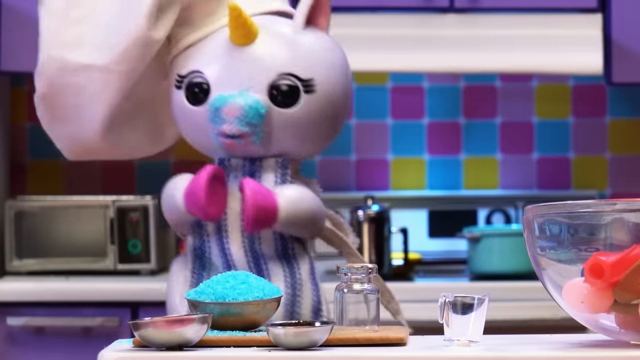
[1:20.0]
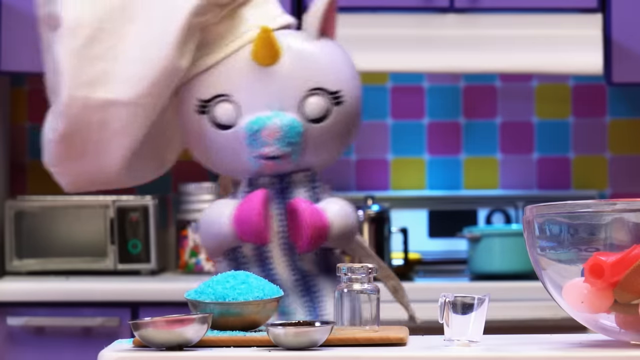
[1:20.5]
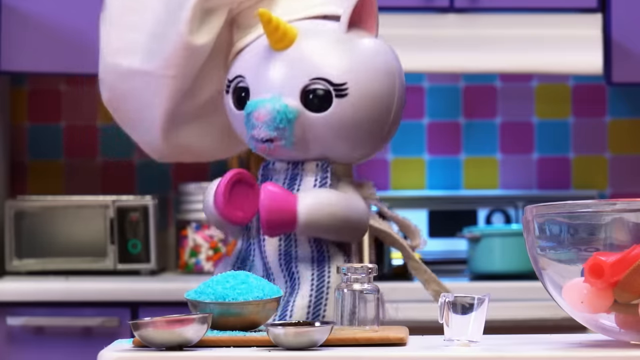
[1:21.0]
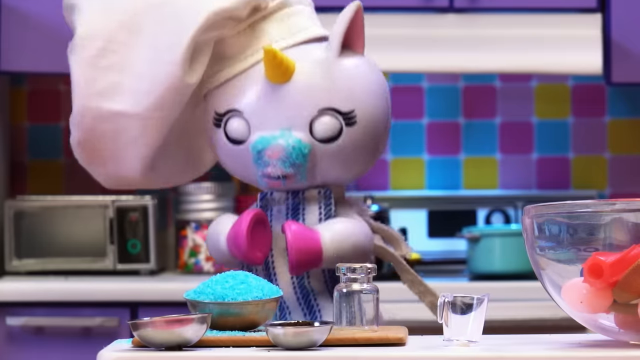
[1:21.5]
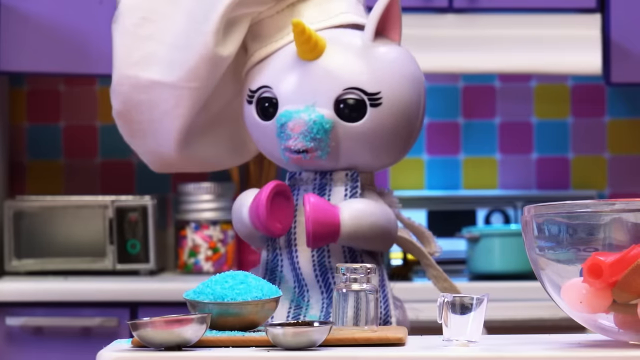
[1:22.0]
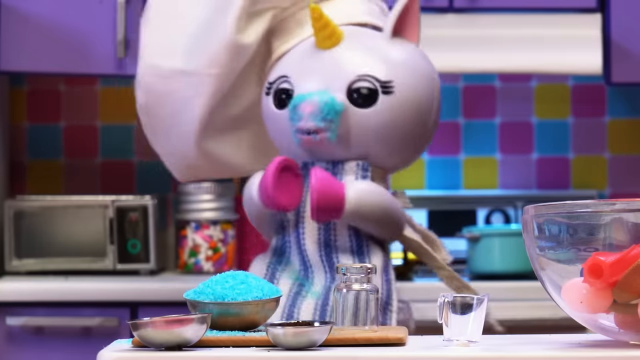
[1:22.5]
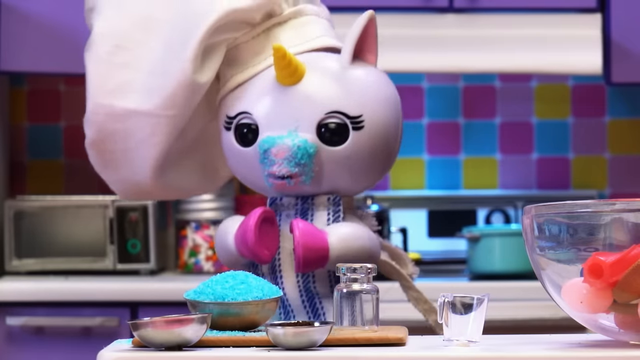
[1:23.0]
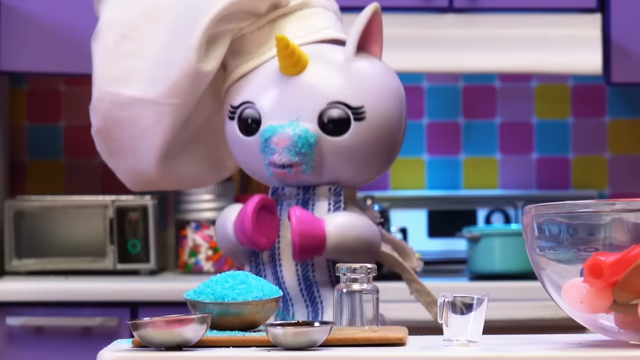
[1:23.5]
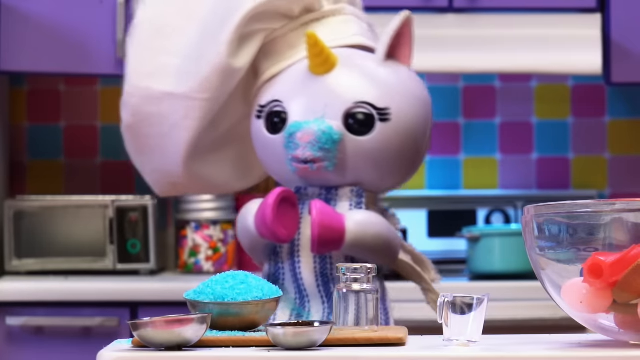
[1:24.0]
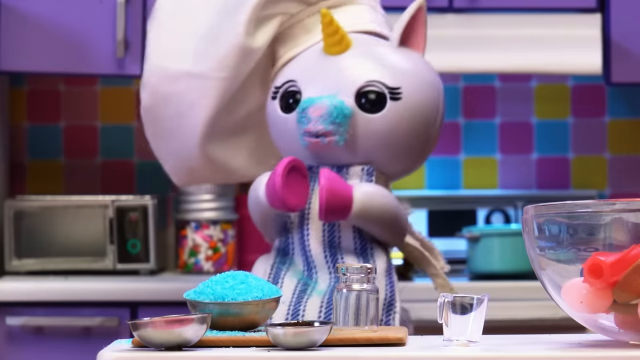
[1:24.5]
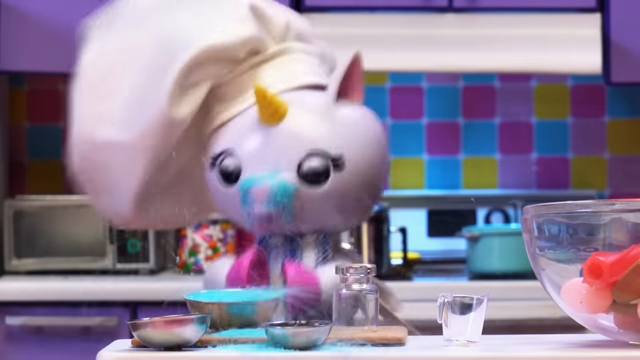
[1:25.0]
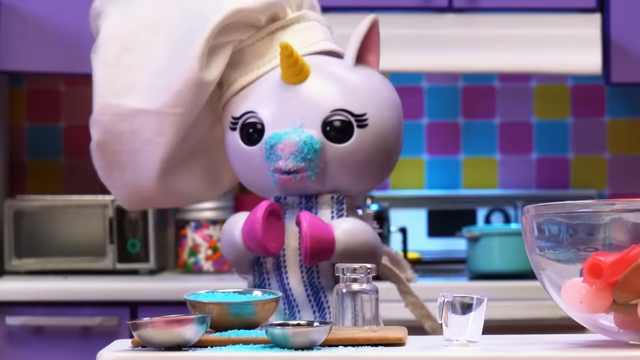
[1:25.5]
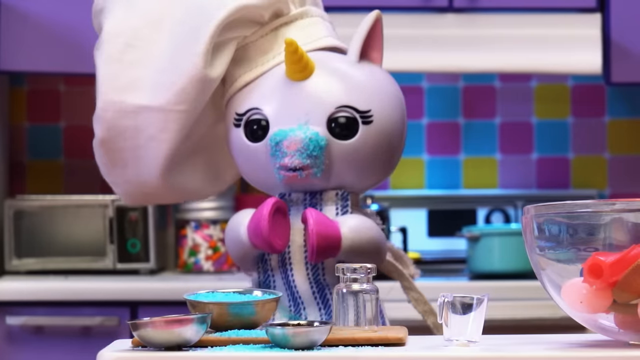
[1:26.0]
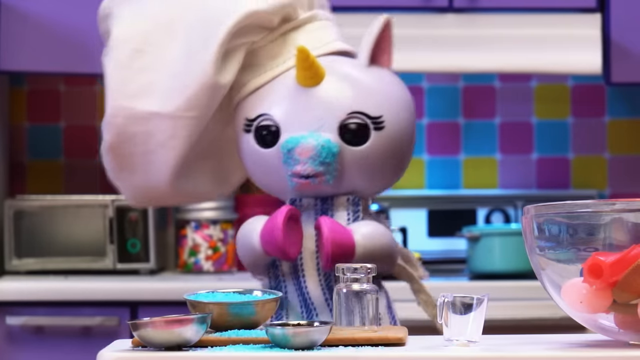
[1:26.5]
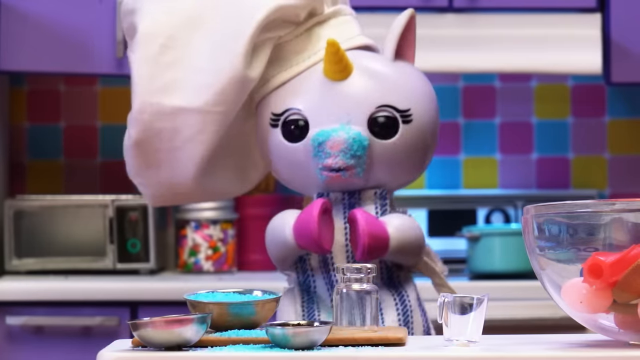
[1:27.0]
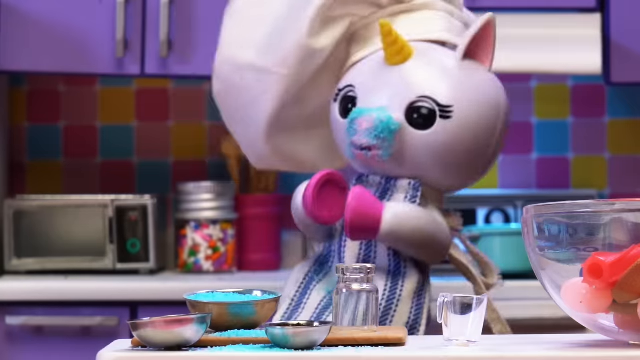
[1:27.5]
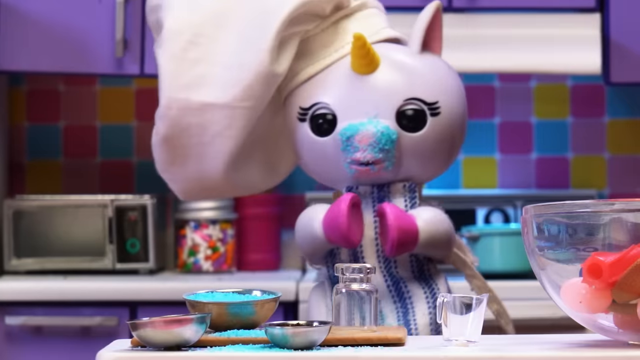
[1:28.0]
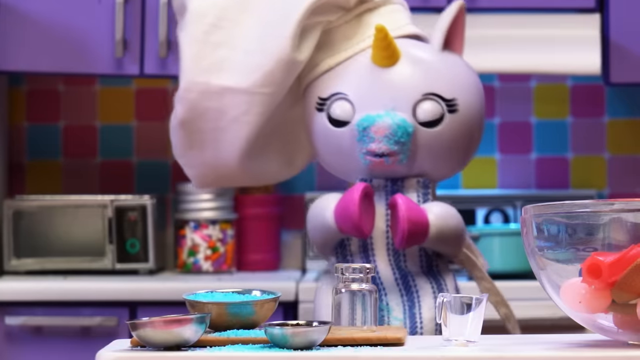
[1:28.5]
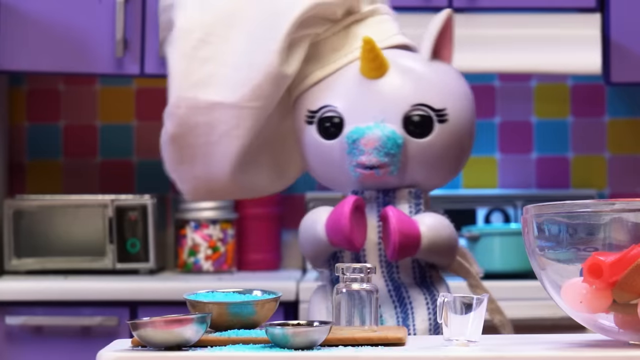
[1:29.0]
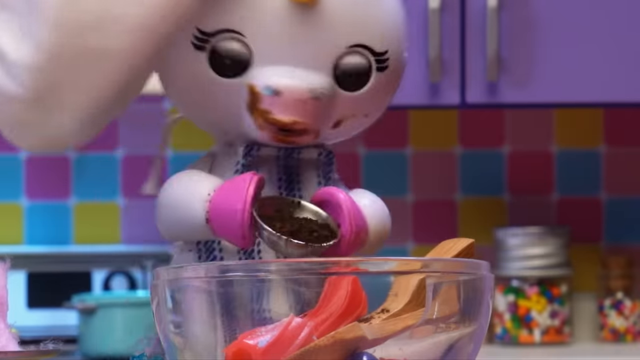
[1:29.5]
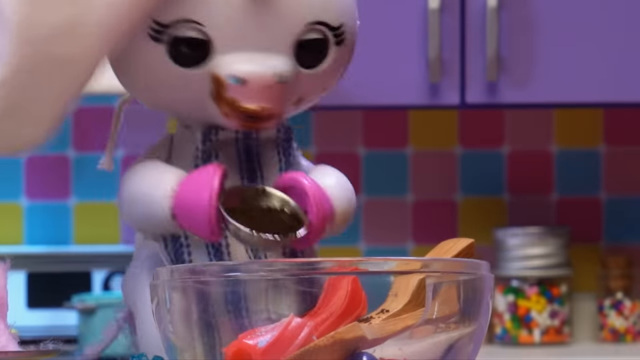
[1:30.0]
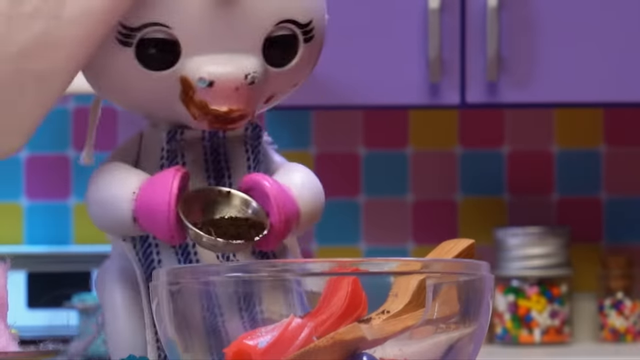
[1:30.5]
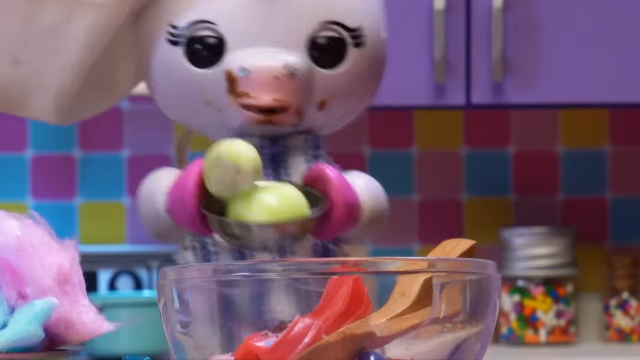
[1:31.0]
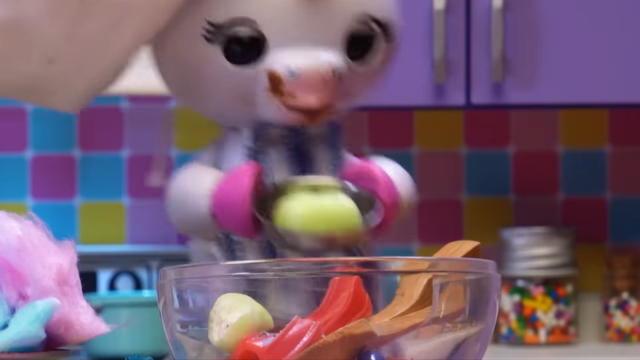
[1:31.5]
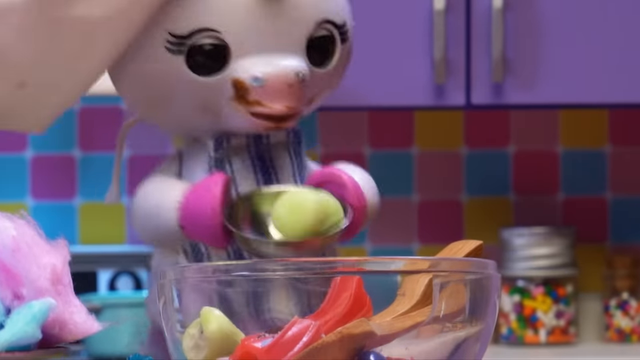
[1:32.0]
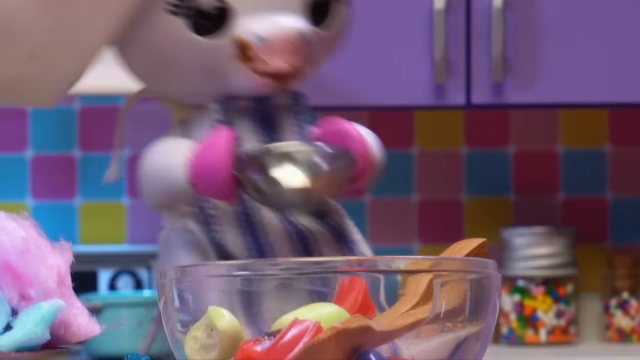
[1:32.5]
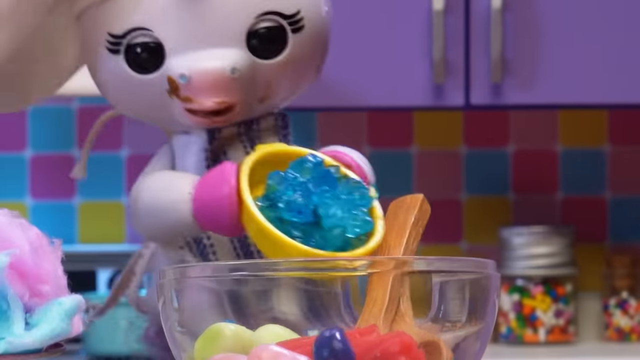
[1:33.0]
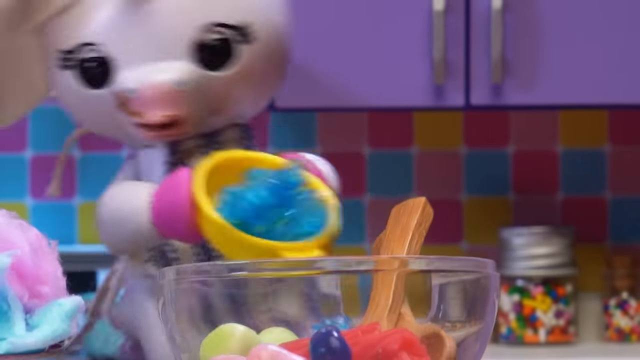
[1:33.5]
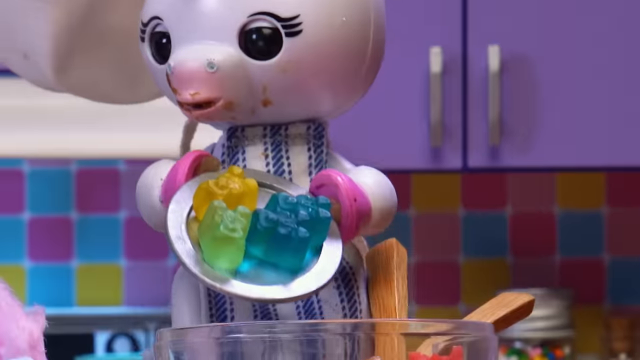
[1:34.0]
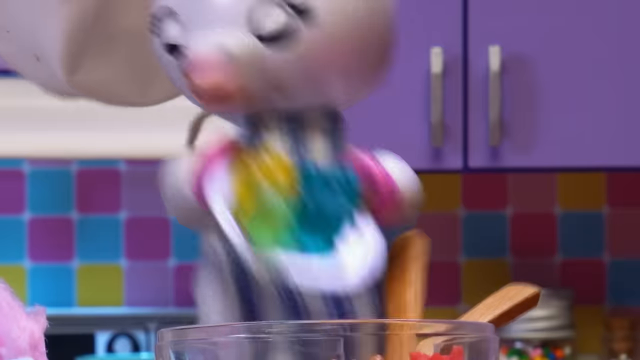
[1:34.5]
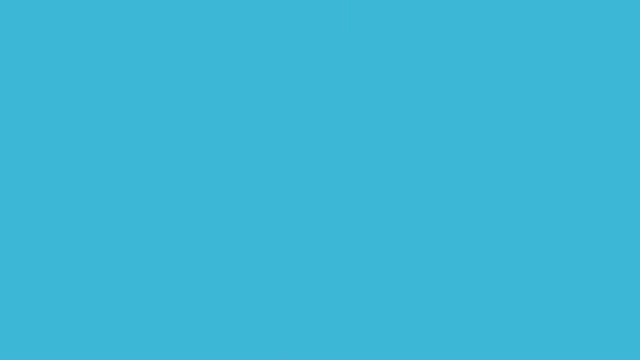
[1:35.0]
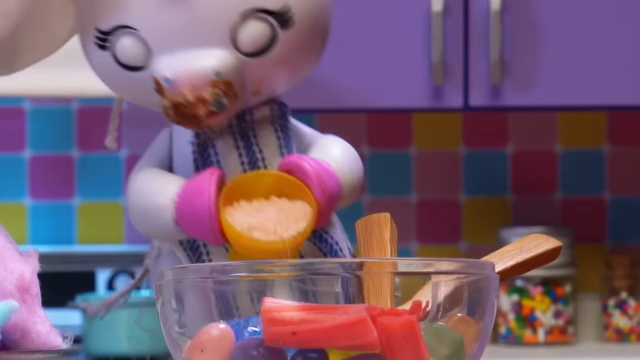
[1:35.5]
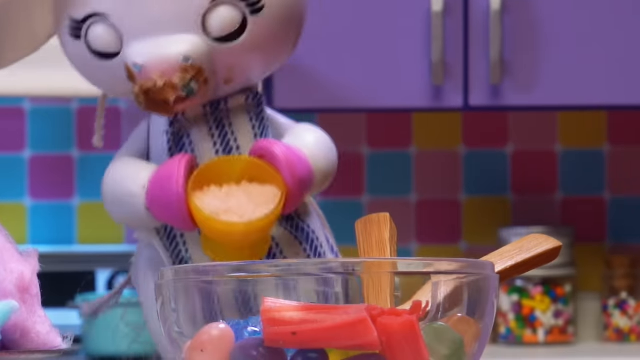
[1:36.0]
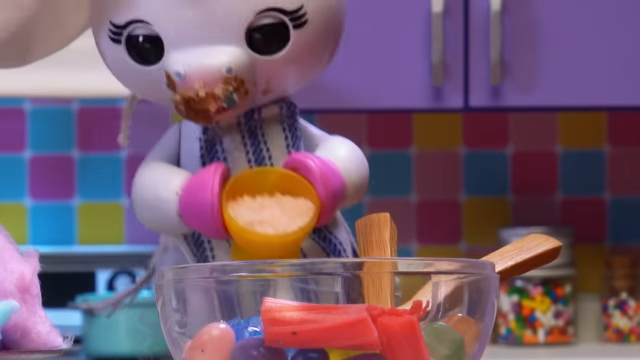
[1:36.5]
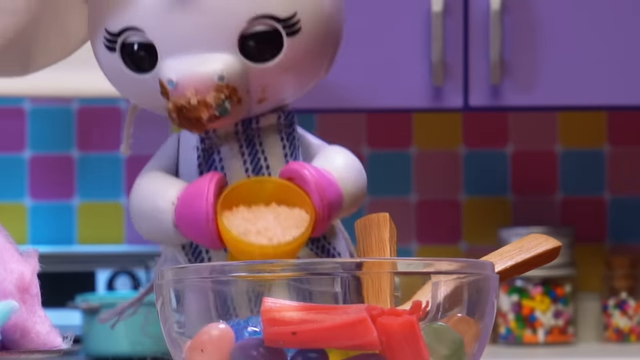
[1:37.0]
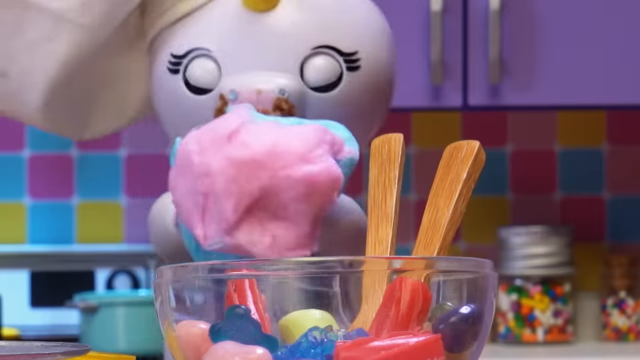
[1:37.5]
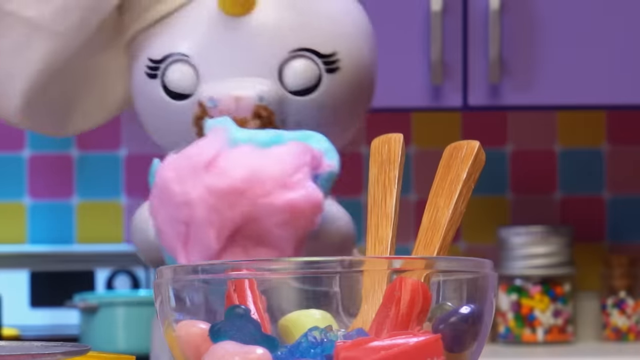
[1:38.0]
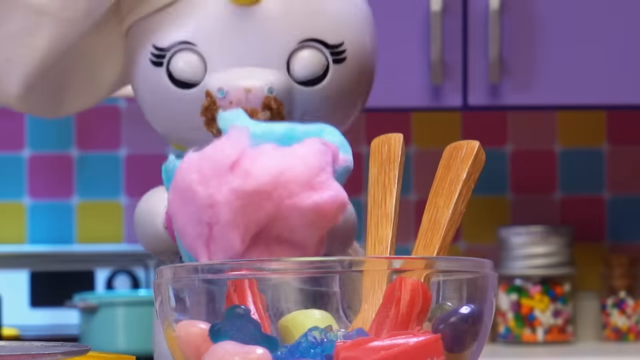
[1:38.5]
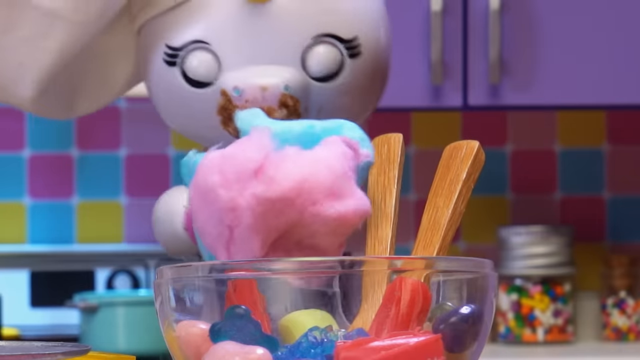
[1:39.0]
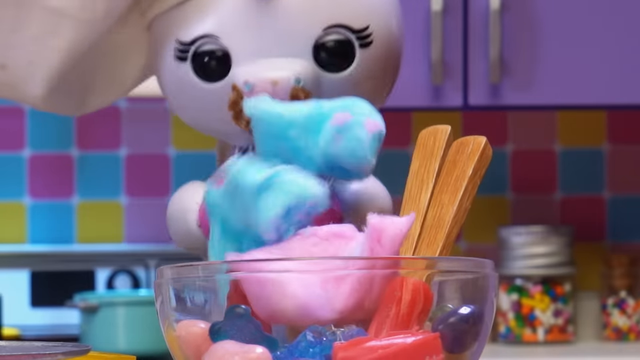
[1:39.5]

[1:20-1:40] With the sugar still around her face, the unicorn moves back and forth, blinking and speaking. Suddenly the sugar kind of blows or disperses from the top of the metal bowl, giving the impression that she maybe sneezed, blew or spoke into it by accident. The camera cuts to a close-up of her pouring a powdery substance that looks like chocolate or coffee grains from a small metal bowl in her hands into the glass bowl. Another cut shows her appearing to semi-frantically put more jelly beans into the glass bowl from a metal bowl she holds; this time the two things in the metal bowl that look like jelly beans are lime green. The camera cuts to a close-up of her above the glass bowl holding a yellow bowl with something blue in it that looks gummy, maybe a chopped-up gummy, which she shakes and tries to pour into the glass bowl. Next she holds a silver plate with four gummy bears on it, two blue, one green and one yellow, and shakes the plate to pour them into the glass bowl. Then she holds a yellow bowl full of something crystallized, maybe sugar, and pours its contents into the glass bowl. In the next cut she holds some cotton candy above the glass bowl and places the pieces into it.